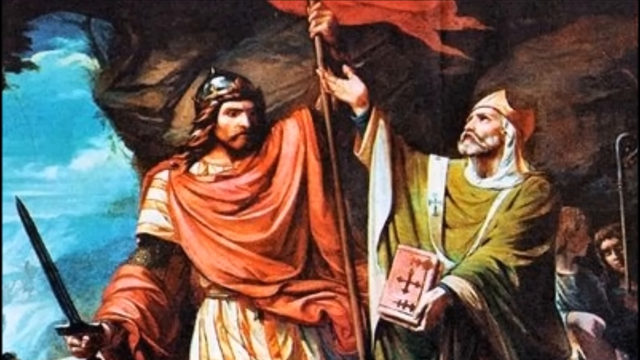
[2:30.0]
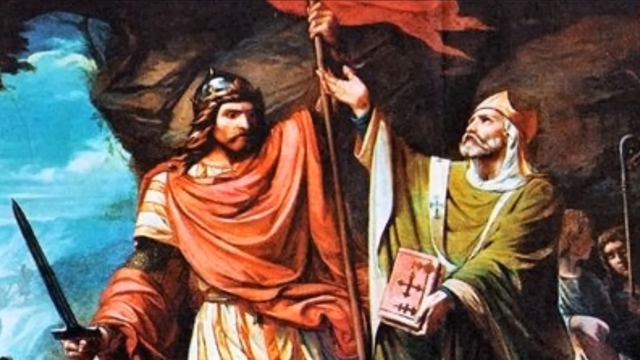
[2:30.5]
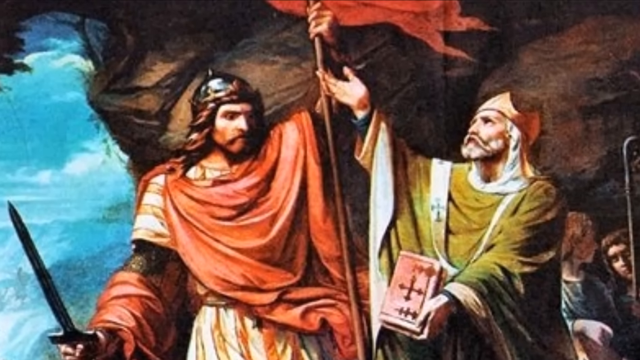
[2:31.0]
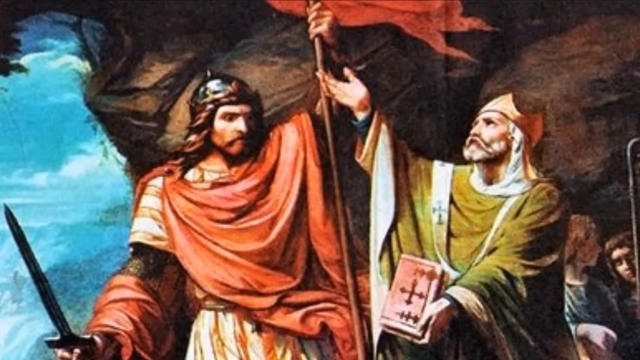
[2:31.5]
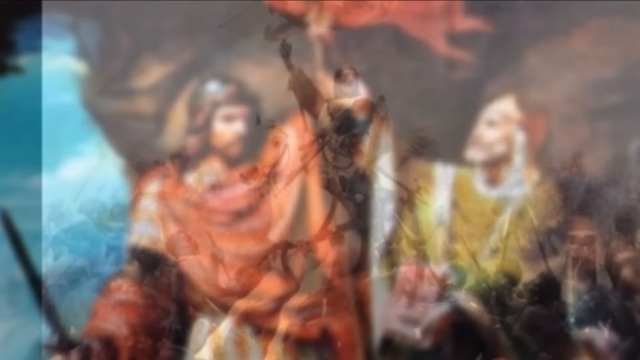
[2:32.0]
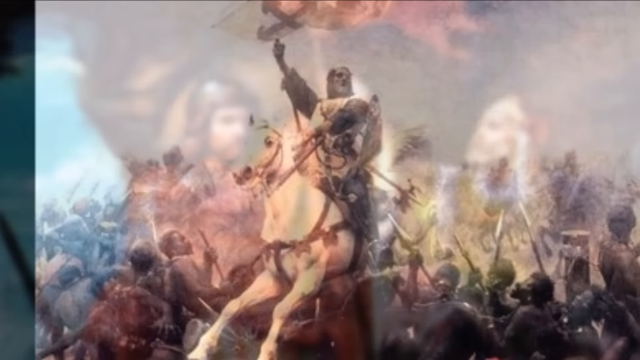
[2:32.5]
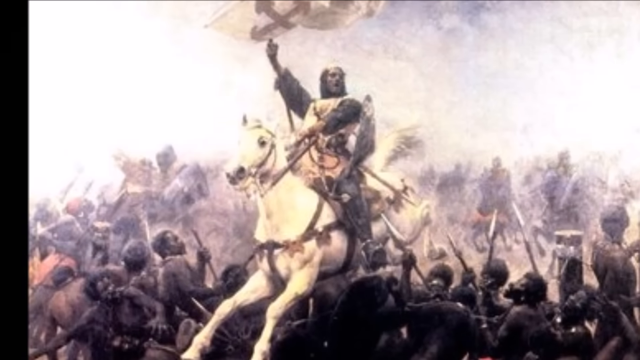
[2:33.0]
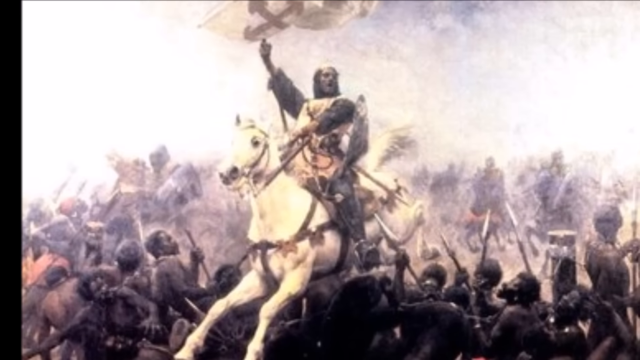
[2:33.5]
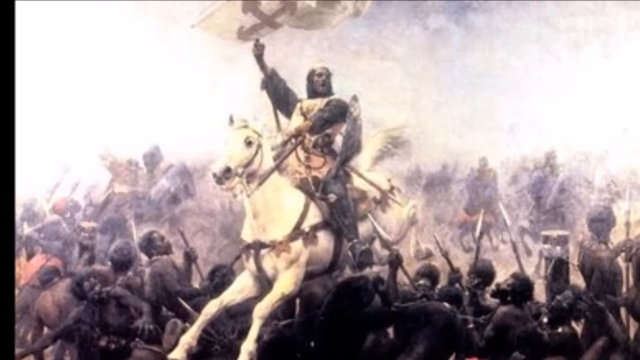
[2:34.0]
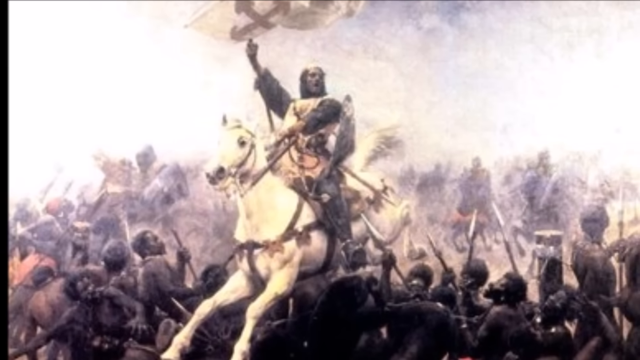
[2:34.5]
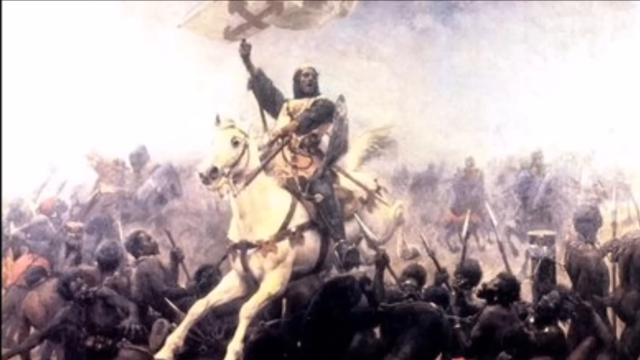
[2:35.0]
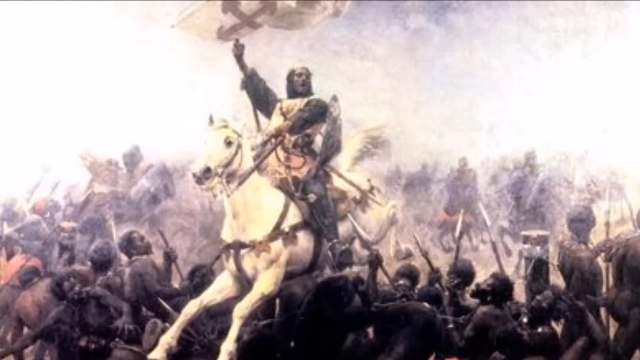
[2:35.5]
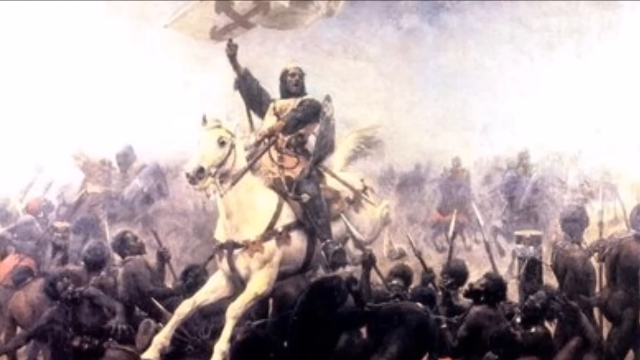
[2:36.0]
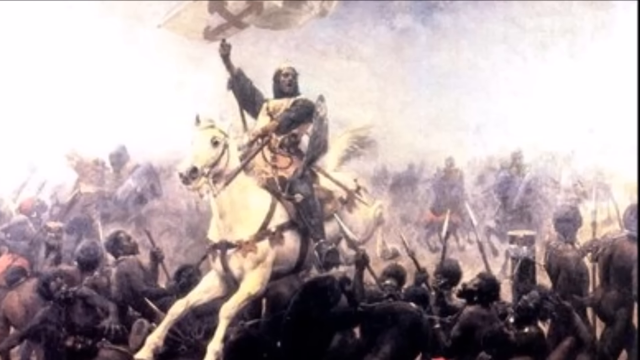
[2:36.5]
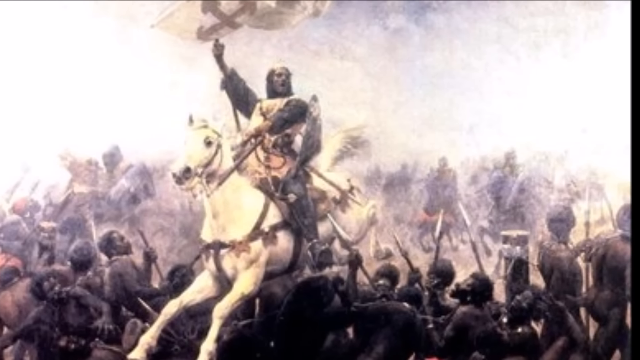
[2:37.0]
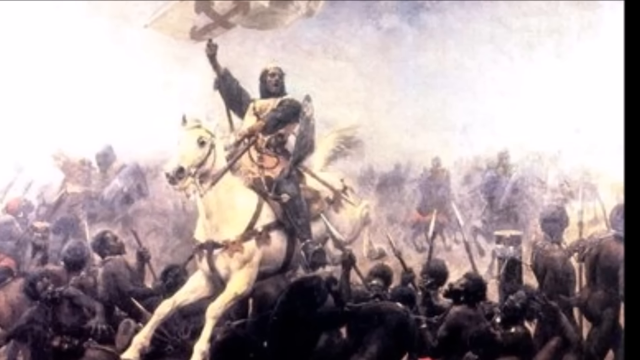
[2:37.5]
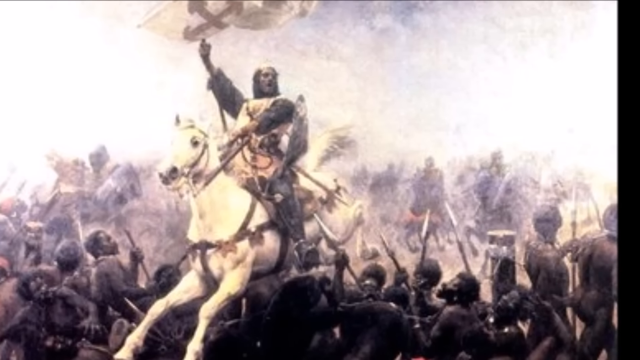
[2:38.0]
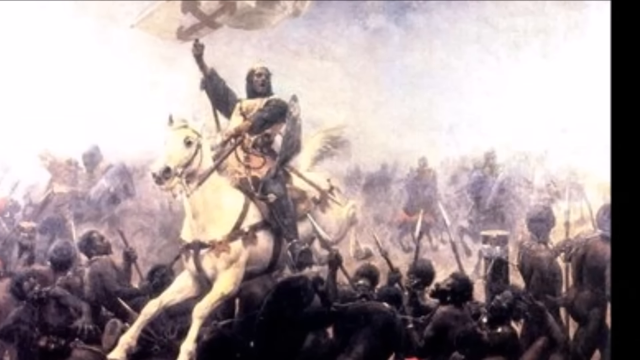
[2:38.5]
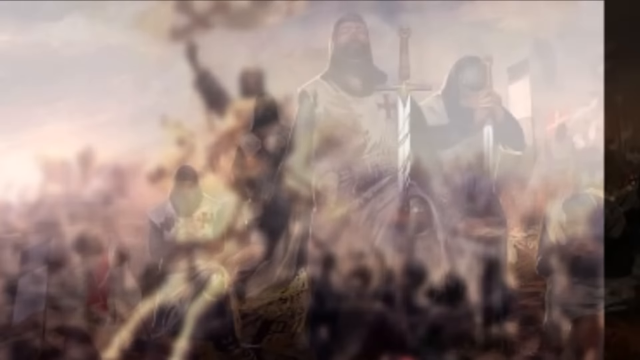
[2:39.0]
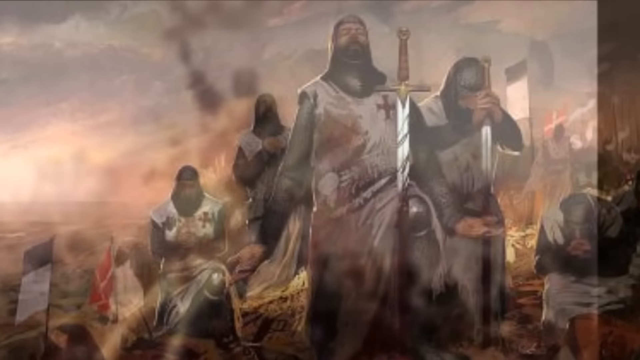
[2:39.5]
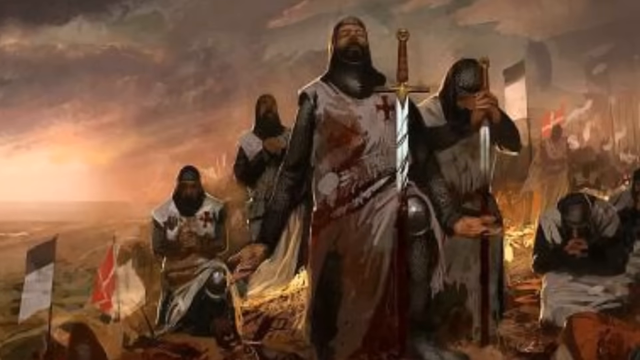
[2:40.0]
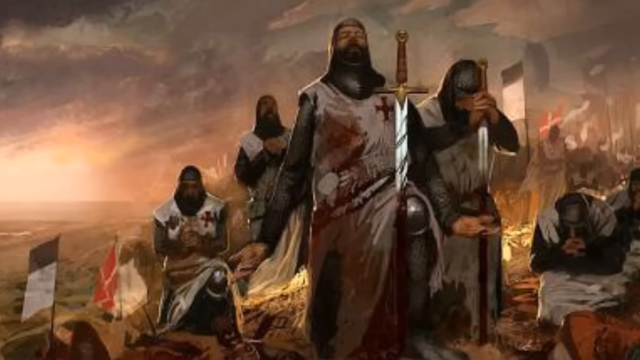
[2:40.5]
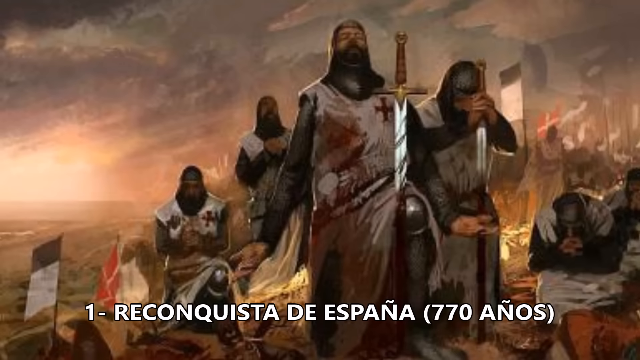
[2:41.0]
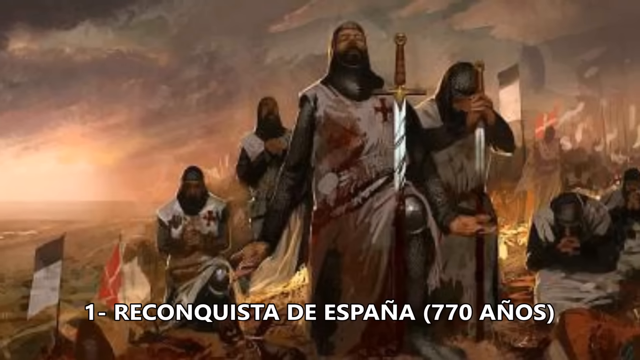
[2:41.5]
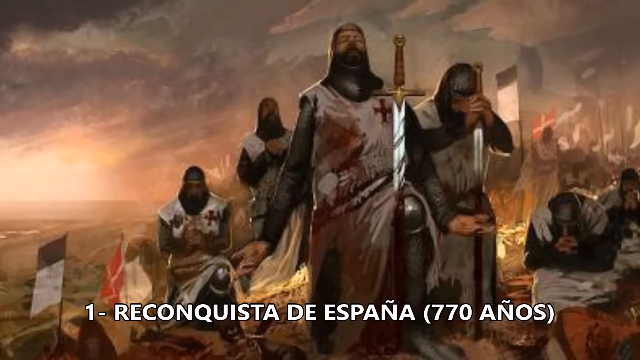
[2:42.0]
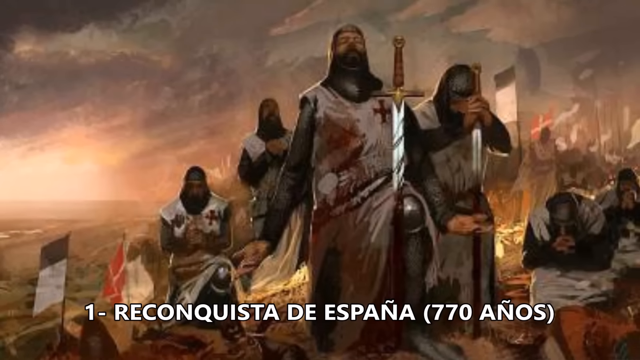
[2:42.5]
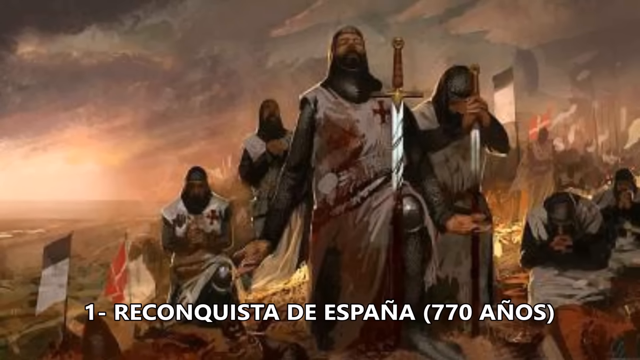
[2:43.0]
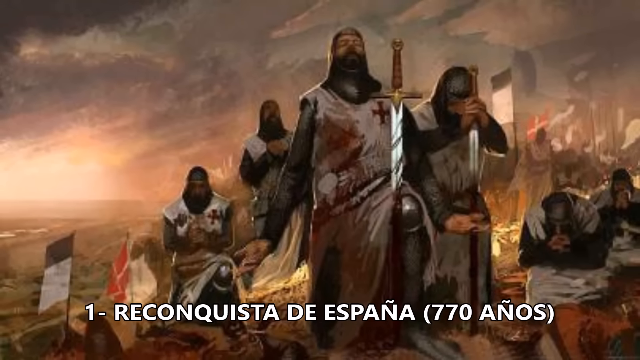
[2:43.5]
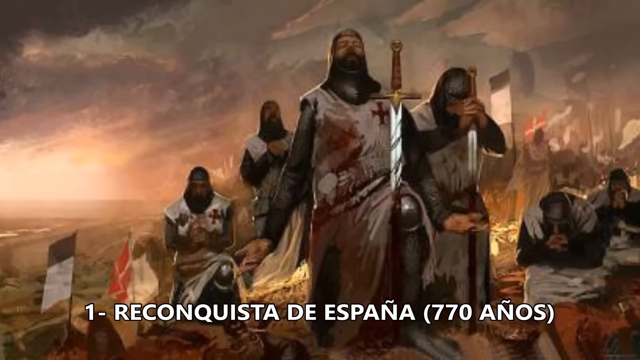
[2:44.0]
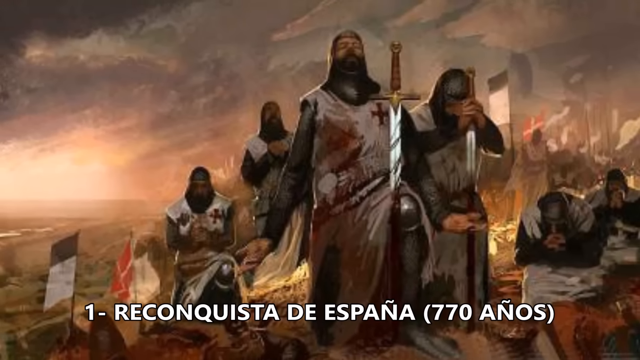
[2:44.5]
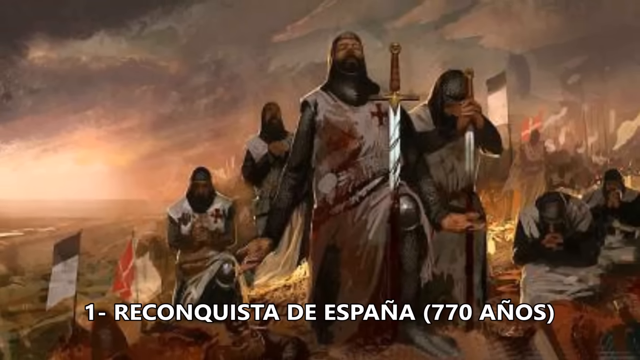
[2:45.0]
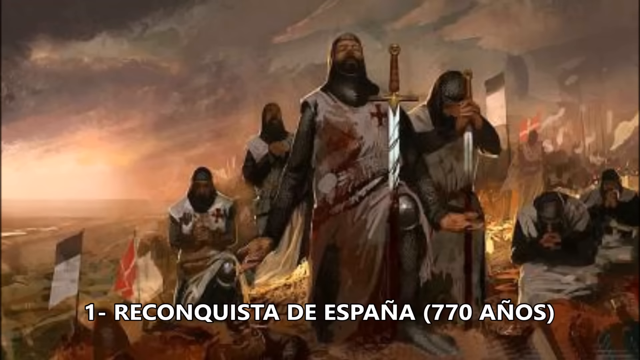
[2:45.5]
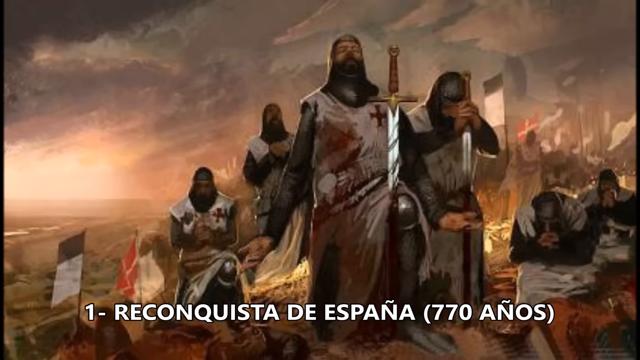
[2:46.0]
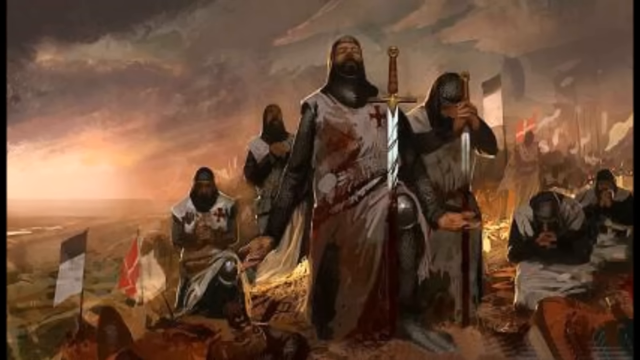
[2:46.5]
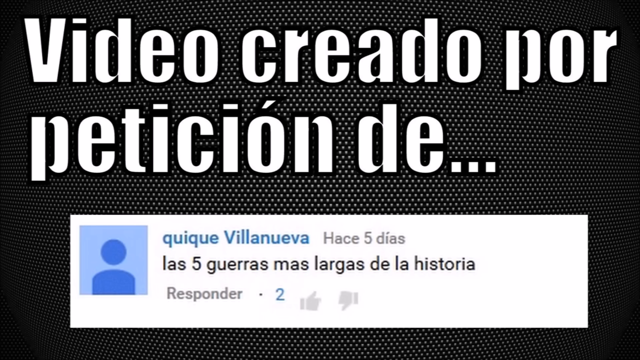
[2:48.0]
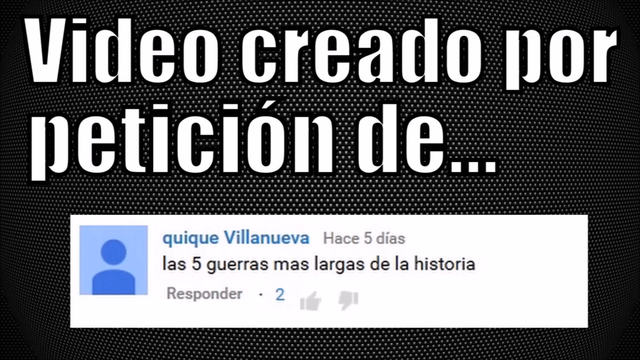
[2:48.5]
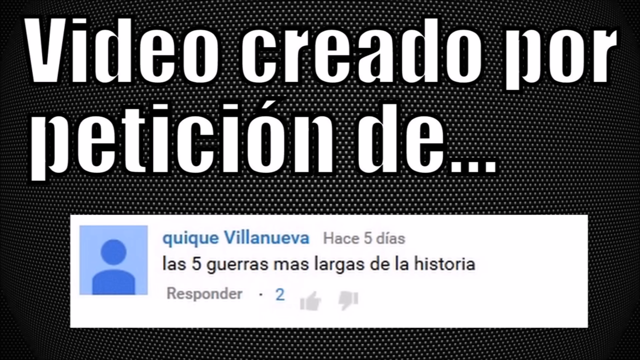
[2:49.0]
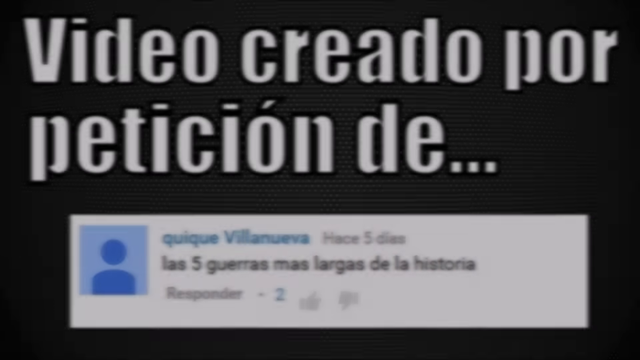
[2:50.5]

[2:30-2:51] The final war, number one, is the reconquest of Spain by its Christian northern kingdoms of Navarra, Castile, Aragon and Leon. Knights charge into battle against an African enemy. The knights bear the mark of Crusaders, wearing white surcoats with red crosses over their armour, and they are shown on their knees praying as they rest on their swords, which have been inserted into the ground.